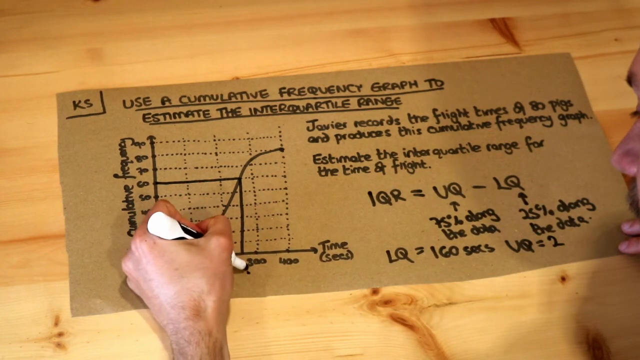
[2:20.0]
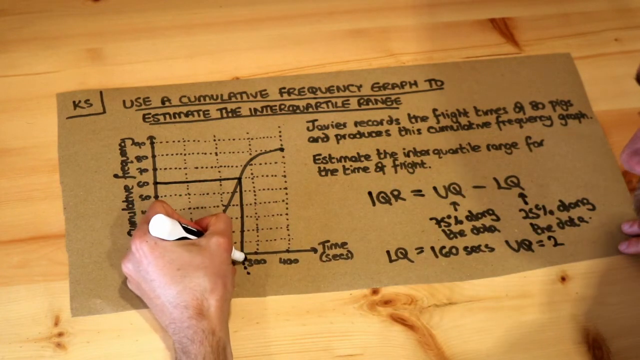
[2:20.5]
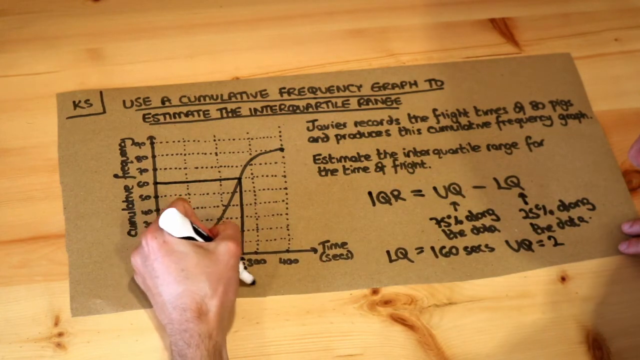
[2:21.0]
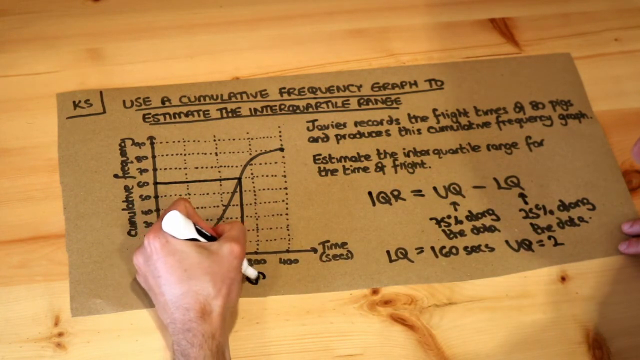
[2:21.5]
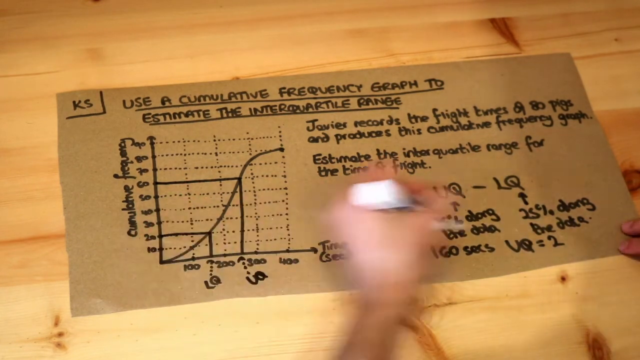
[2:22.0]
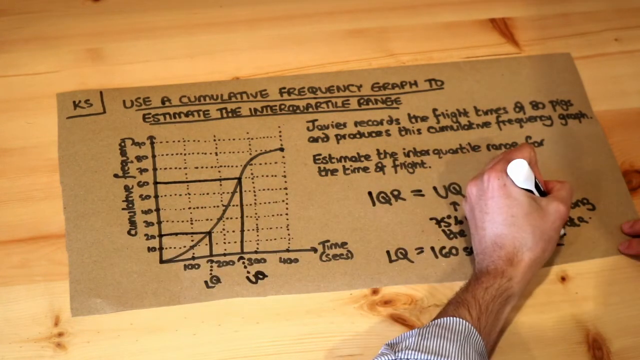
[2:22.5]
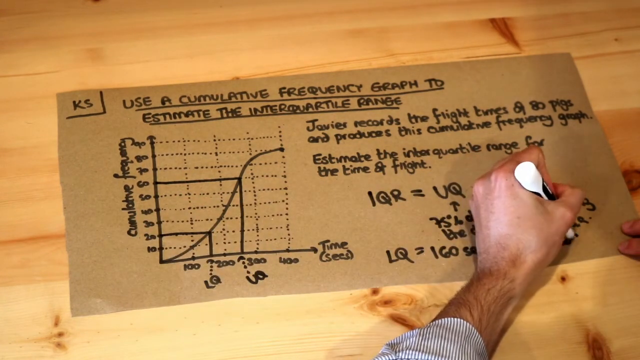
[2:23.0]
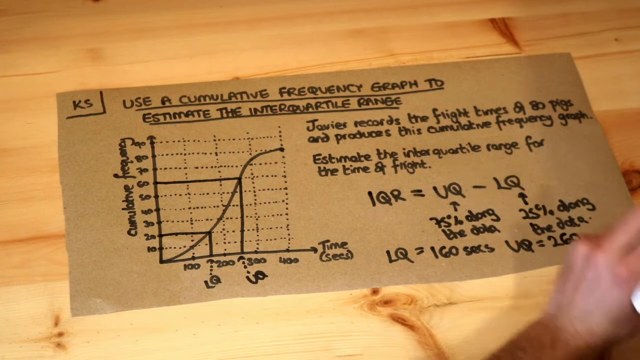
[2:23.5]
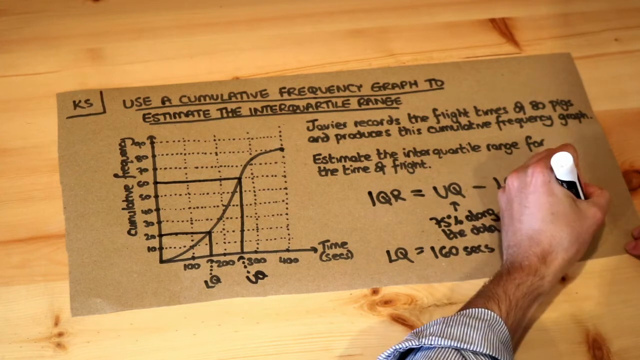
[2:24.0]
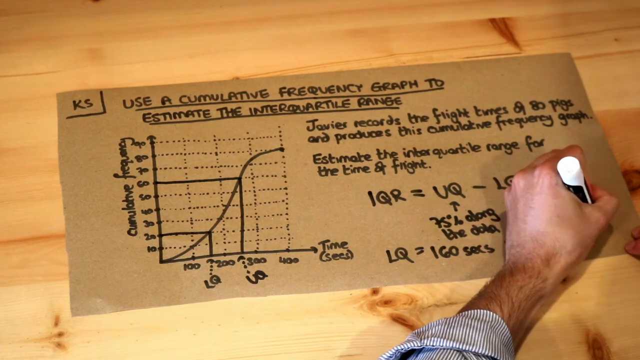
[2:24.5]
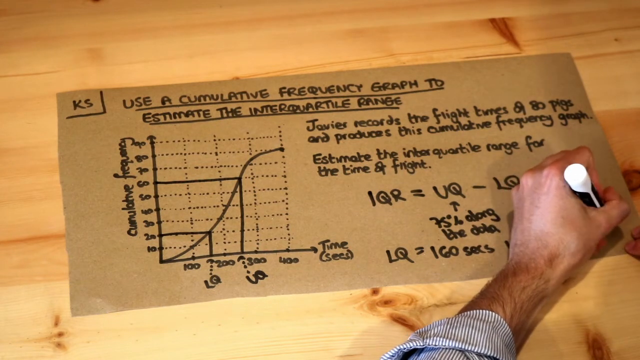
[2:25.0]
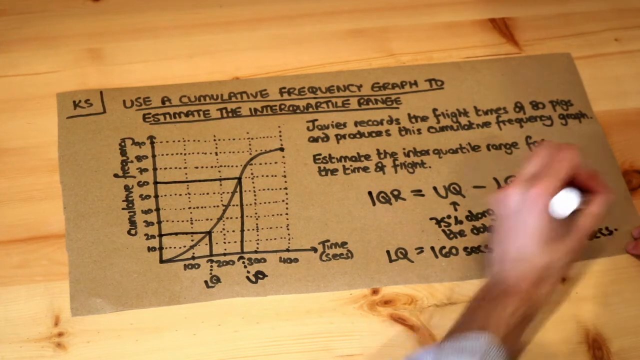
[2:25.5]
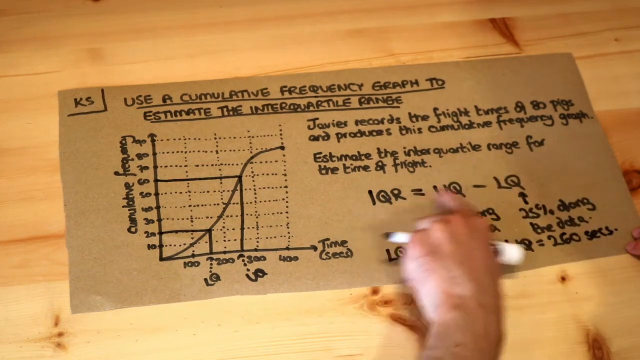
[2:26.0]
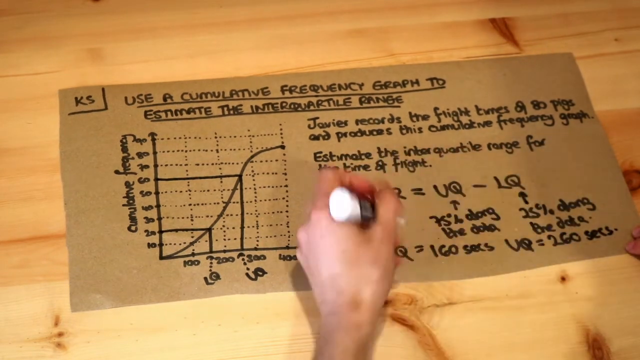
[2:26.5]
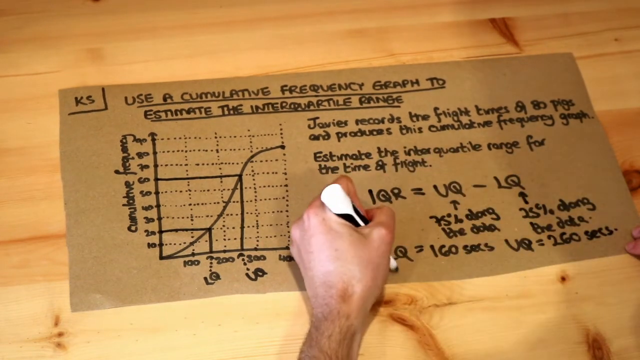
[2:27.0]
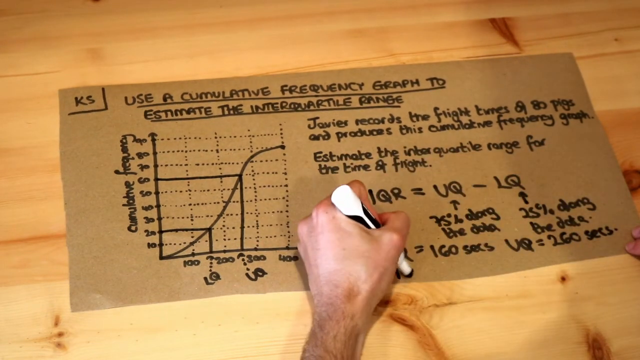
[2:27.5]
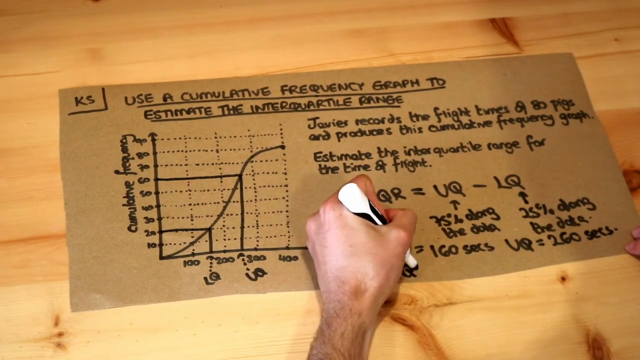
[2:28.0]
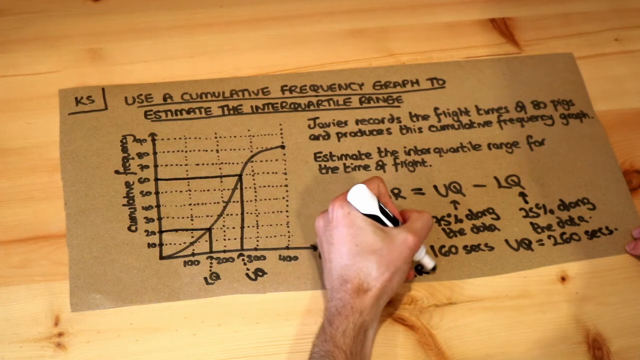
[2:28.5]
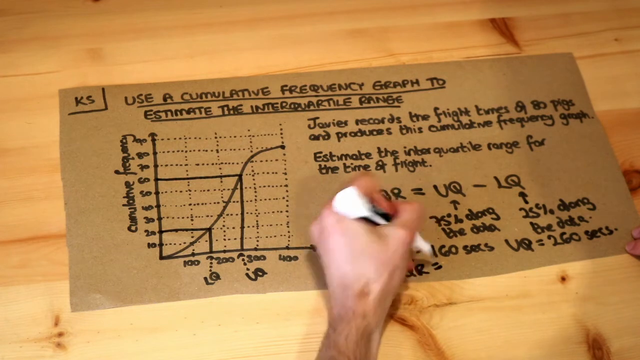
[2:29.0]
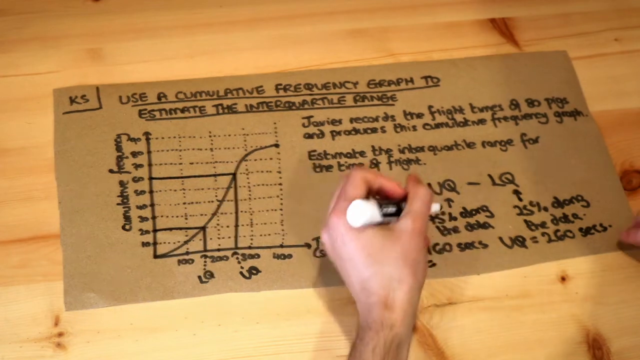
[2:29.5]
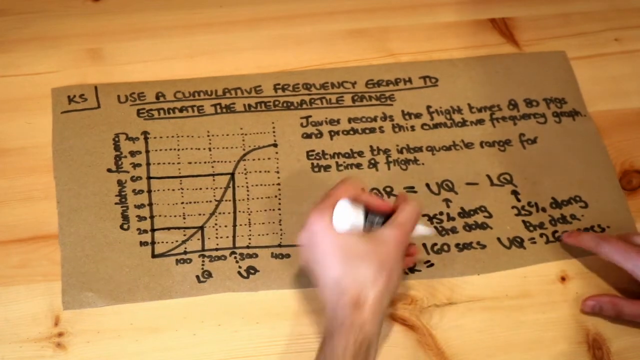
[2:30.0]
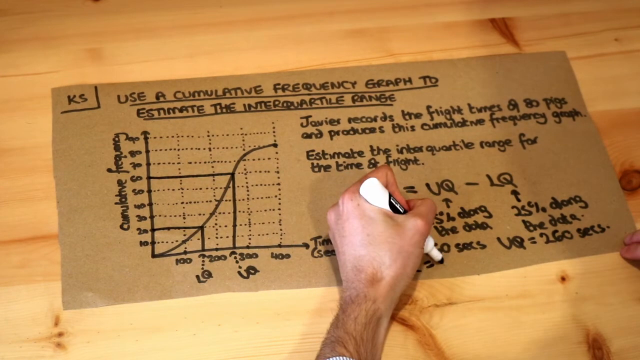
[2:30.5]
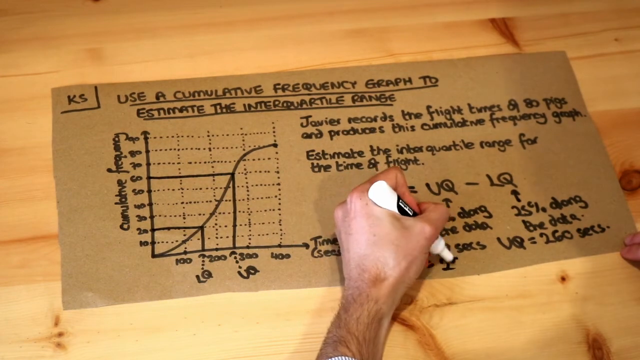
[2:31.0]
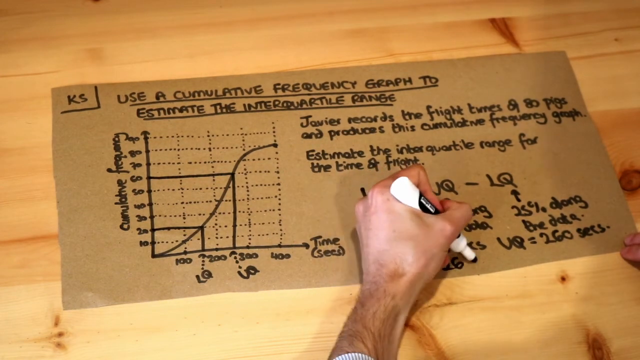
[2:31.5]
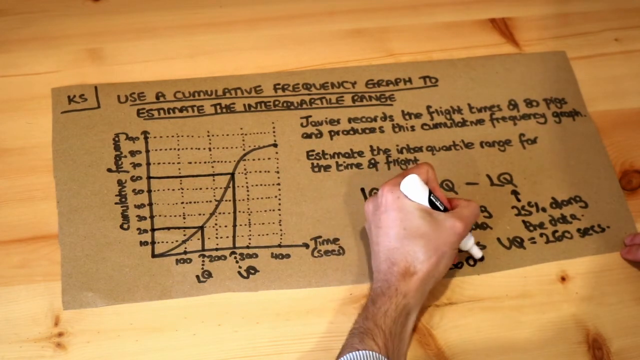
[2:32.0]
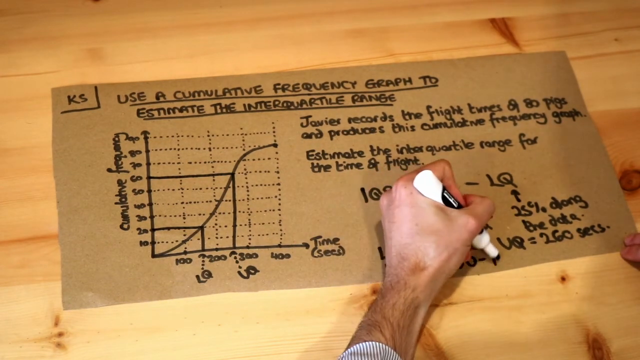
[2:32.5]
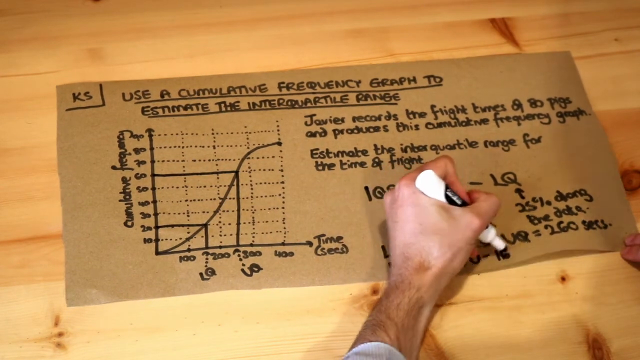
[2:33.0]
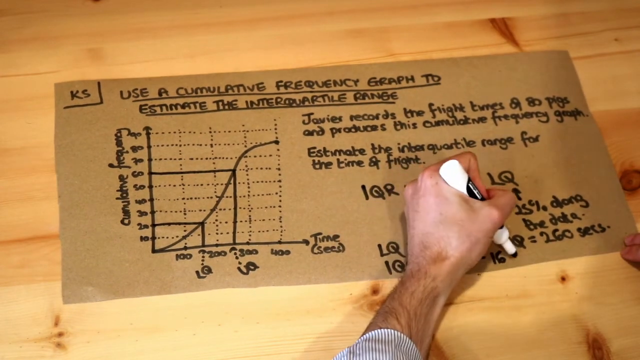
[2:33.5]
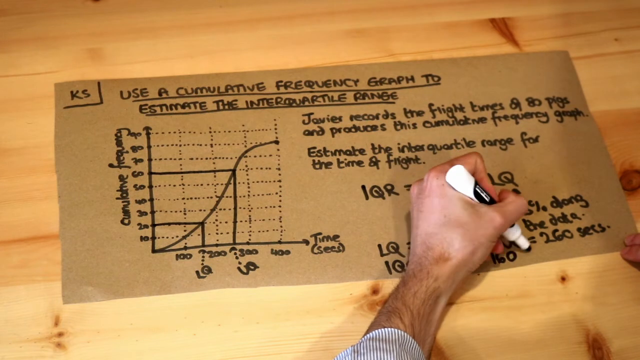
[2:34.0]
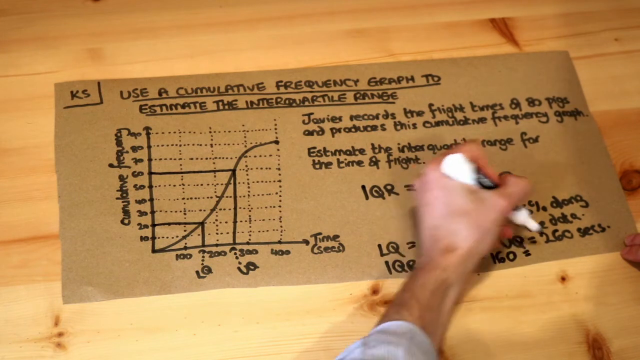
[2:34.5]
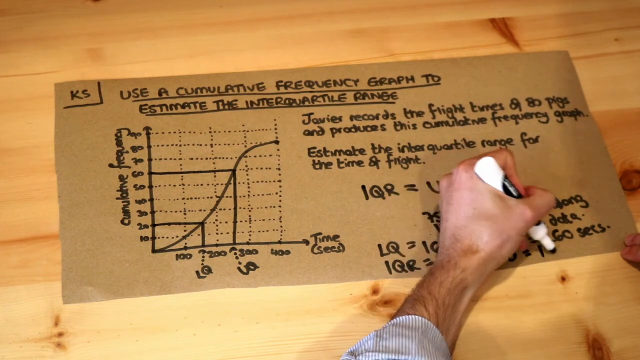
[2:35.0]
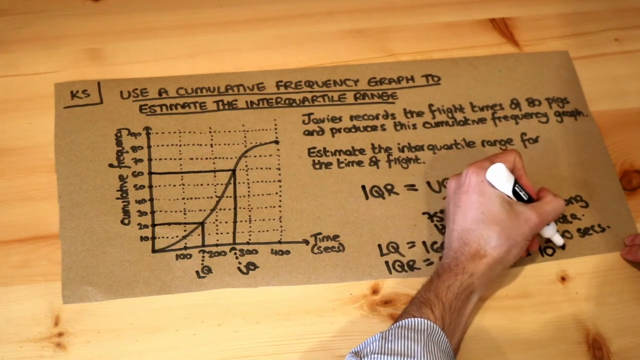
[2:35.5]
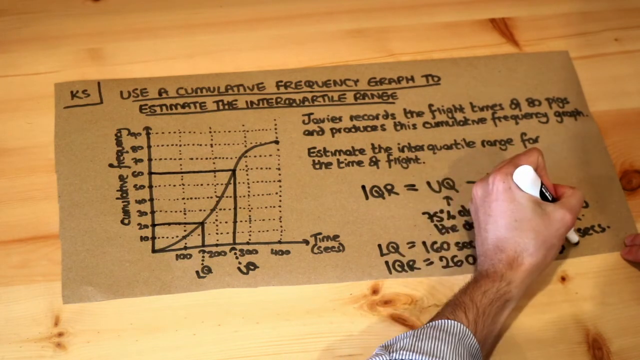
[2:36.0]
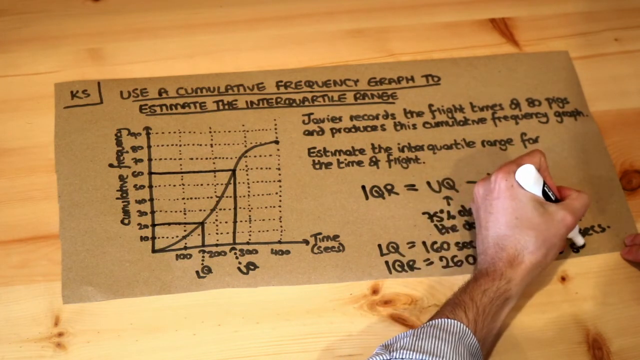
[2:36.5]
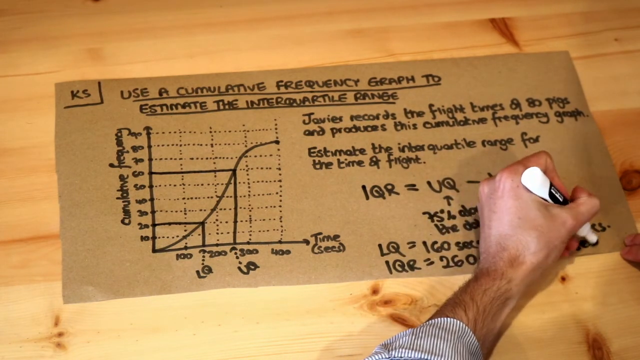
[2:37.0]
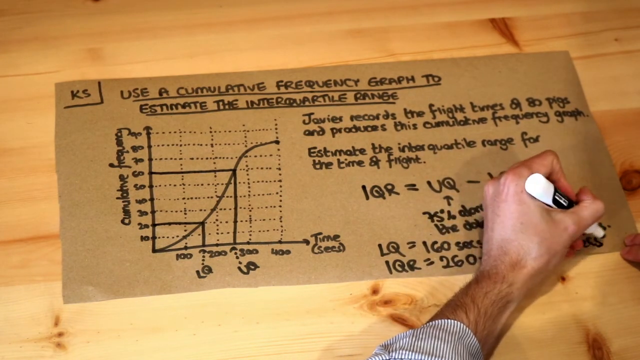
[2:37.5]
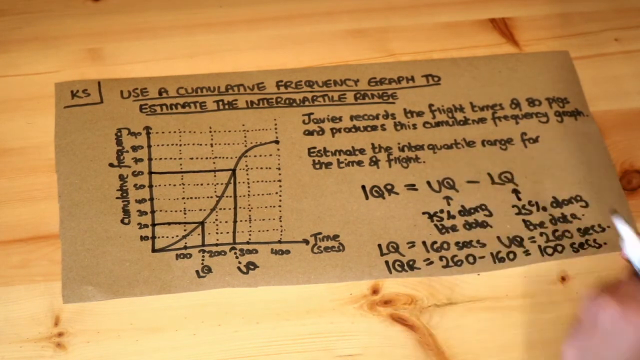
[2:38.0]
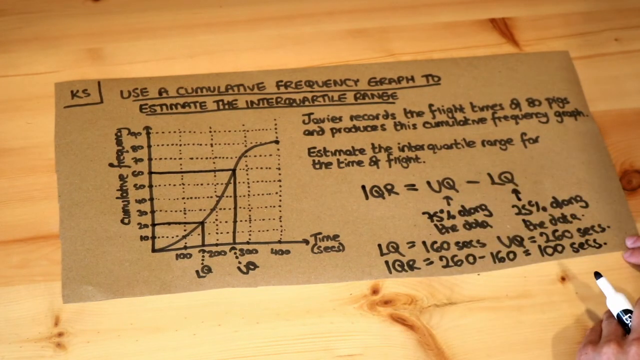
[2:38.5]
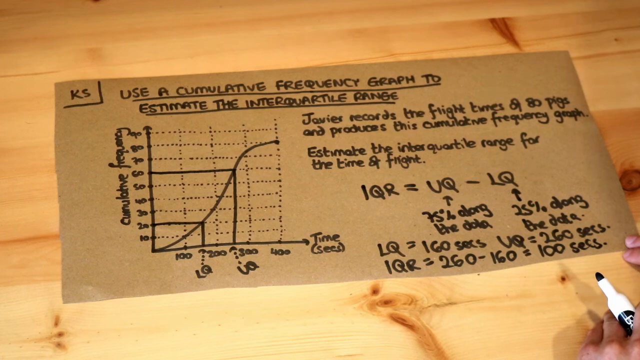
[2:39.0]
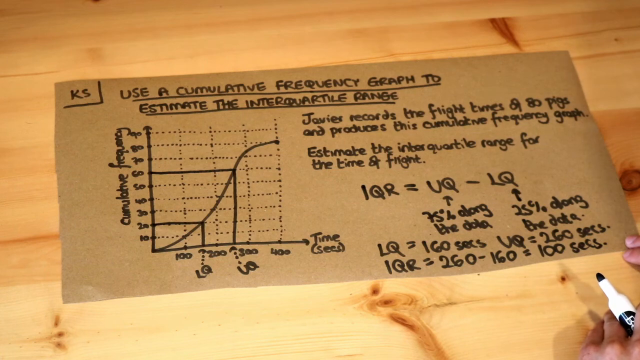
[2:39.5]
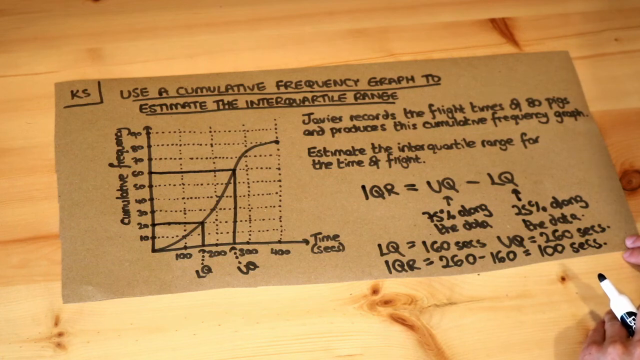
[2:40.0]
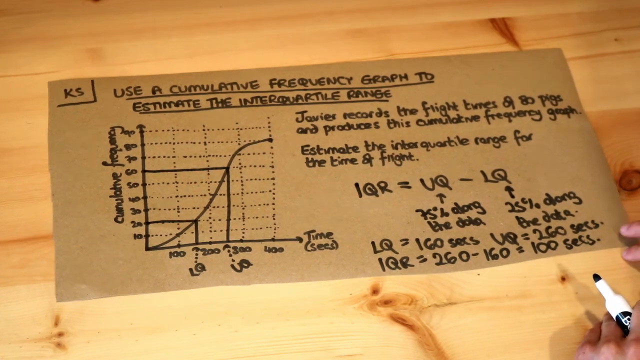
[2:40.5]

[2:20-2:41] A man is drawing a graph and information with a black marker on a cut-out piece of cardboard with raw edges. It is titled "use of a cumulative frequency graph to estimate the interquartile range," and "KS" is in the upper left-hand corner. The line graph has a curved line that goes out and bends, with time on the bottom and cumulative frequency on the side. He has written two sentences and equations underneath them, and is writing his last equation, holding the cardboard down with his right hand while writing with the marker in his left. He has drawn two boxes, a very small one in the innermost corner of the graph and a larger one that goes out further. At the bottom, at the end of the lines he has made, he has put "LQ" and another mark that looks like "LQ" as well. He continues writing equations of what equals what.